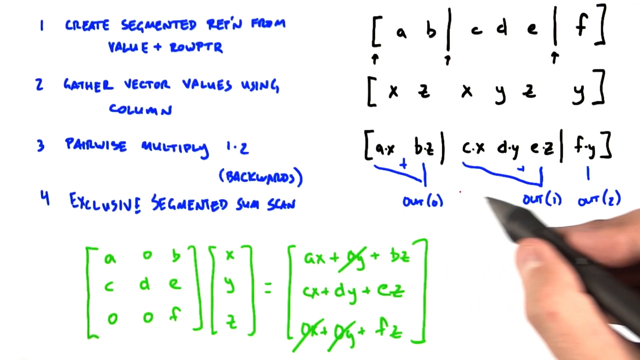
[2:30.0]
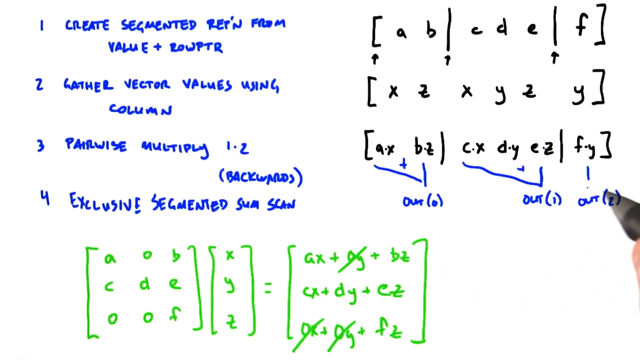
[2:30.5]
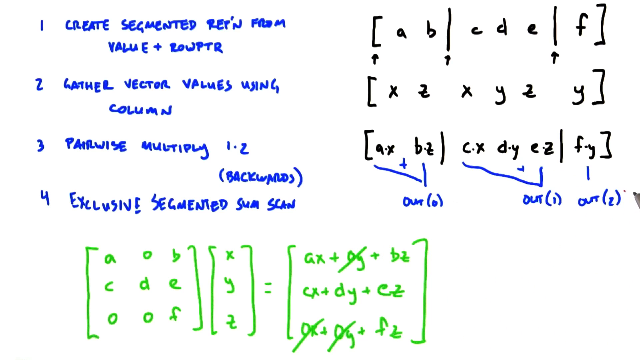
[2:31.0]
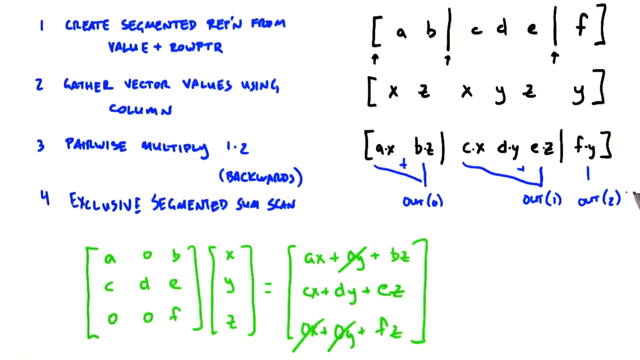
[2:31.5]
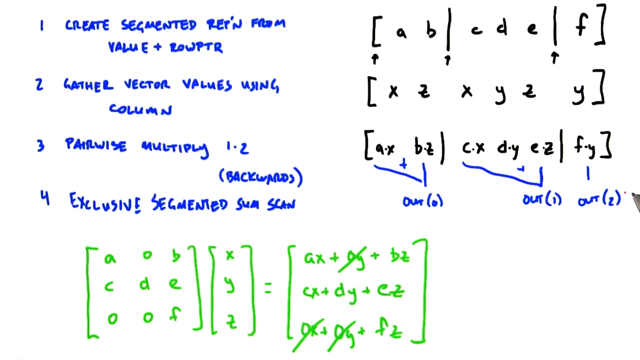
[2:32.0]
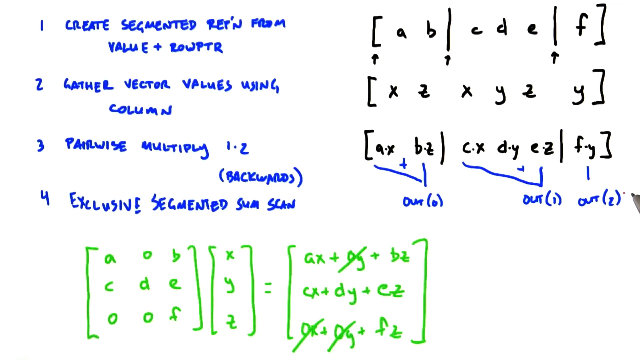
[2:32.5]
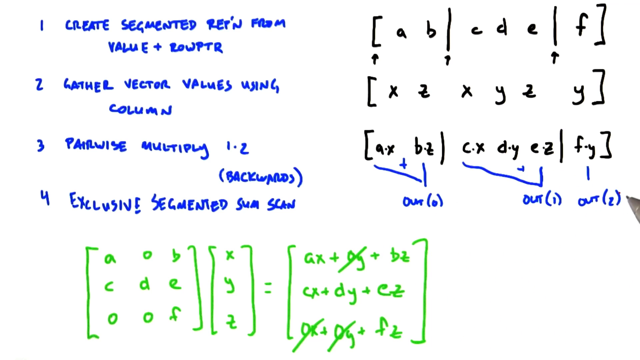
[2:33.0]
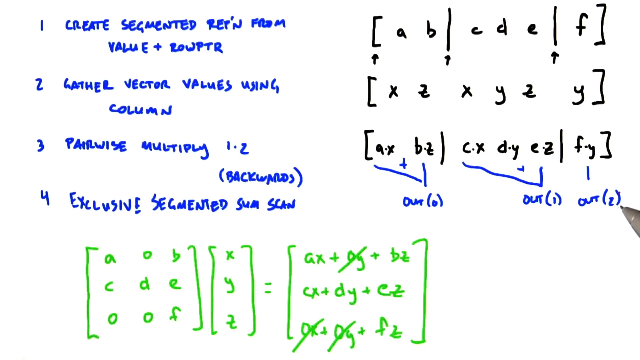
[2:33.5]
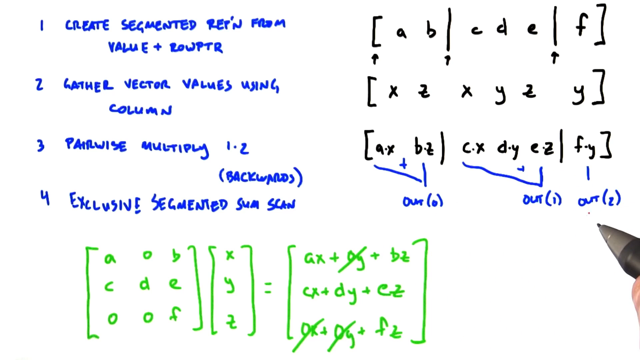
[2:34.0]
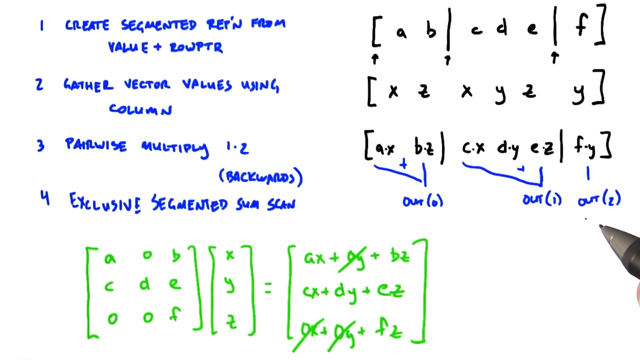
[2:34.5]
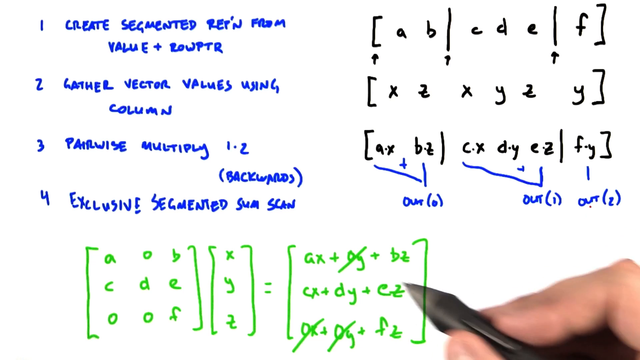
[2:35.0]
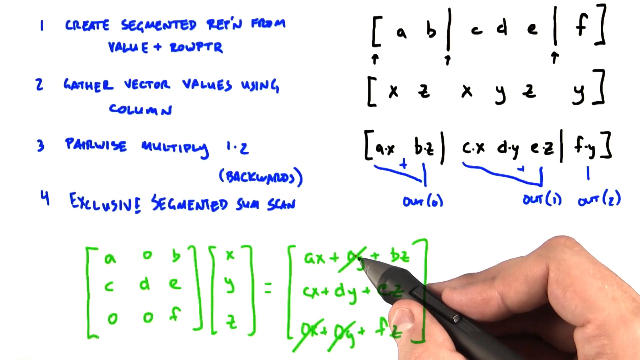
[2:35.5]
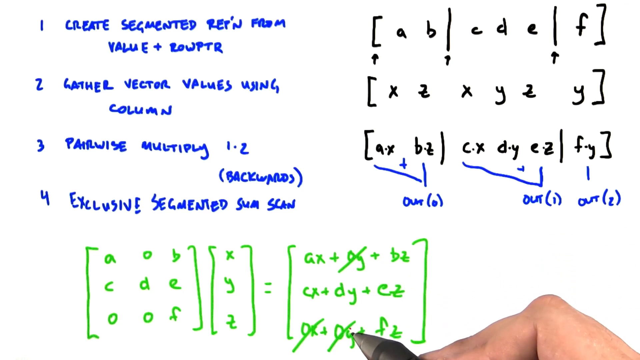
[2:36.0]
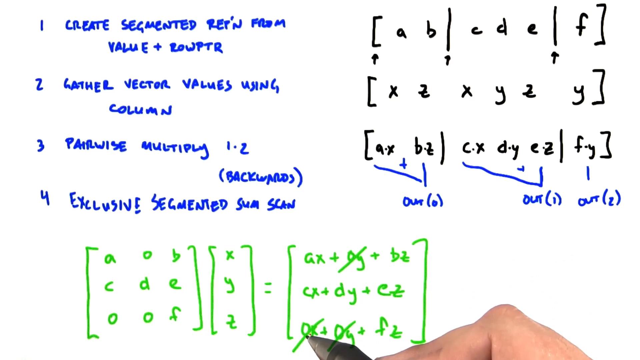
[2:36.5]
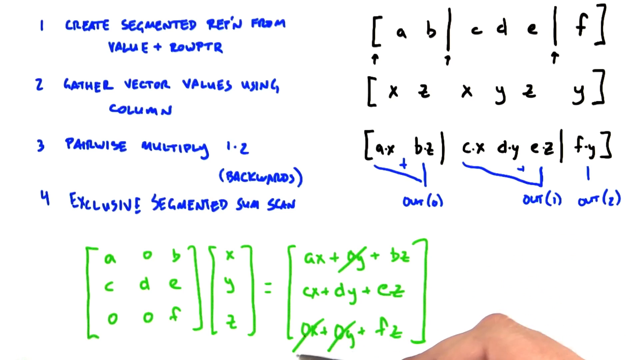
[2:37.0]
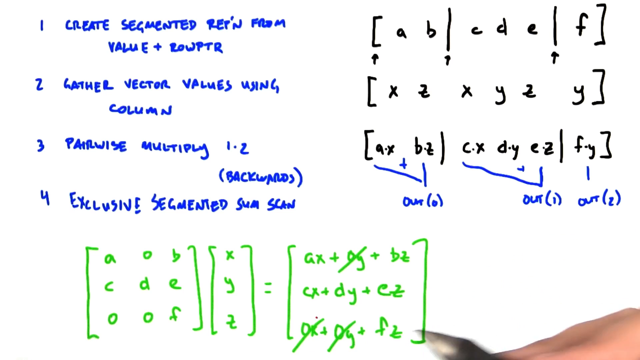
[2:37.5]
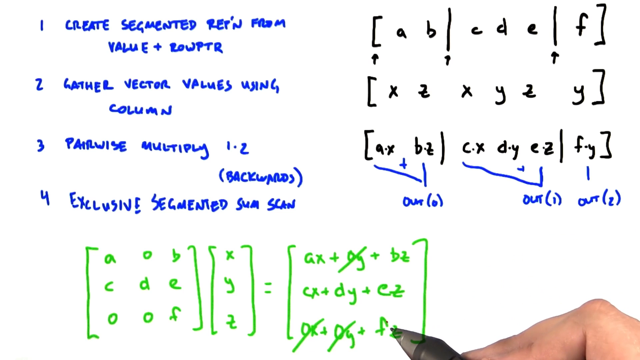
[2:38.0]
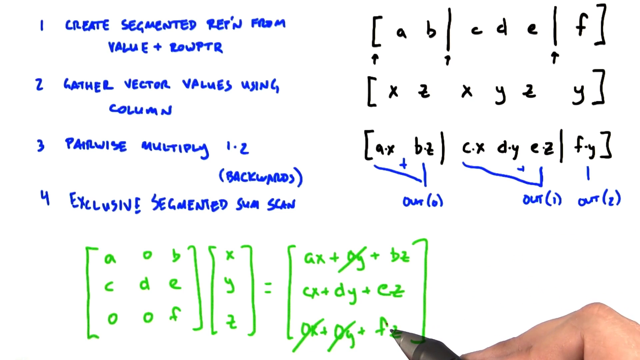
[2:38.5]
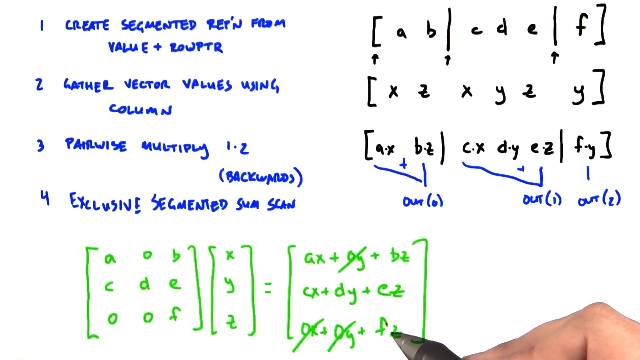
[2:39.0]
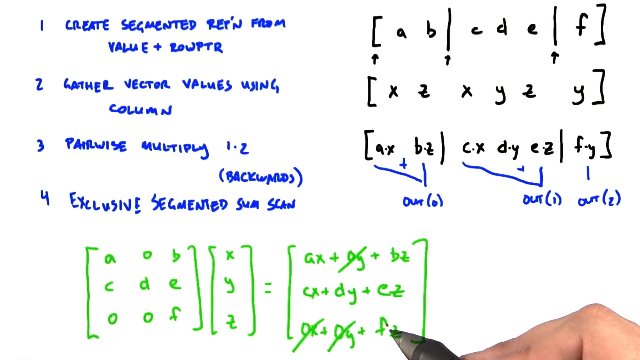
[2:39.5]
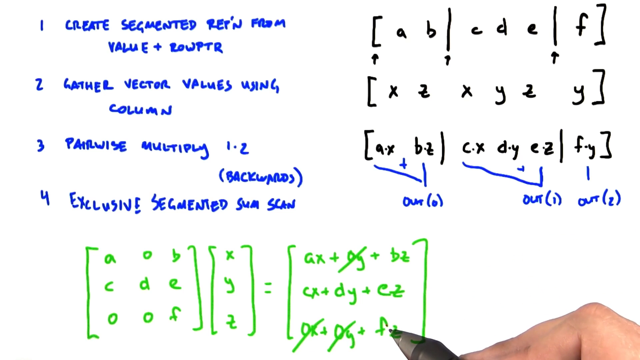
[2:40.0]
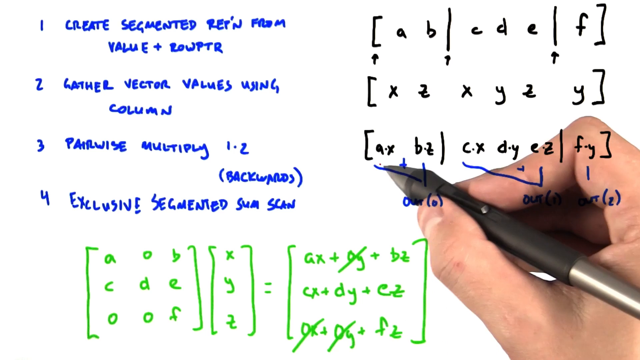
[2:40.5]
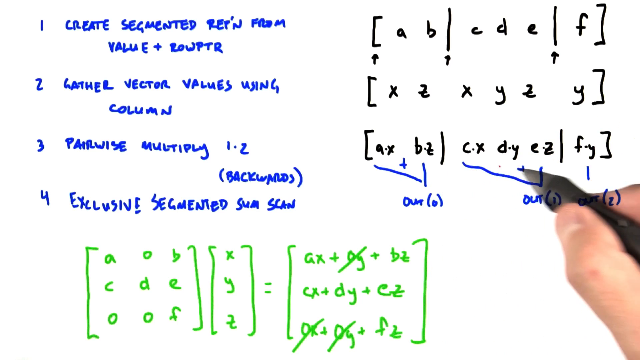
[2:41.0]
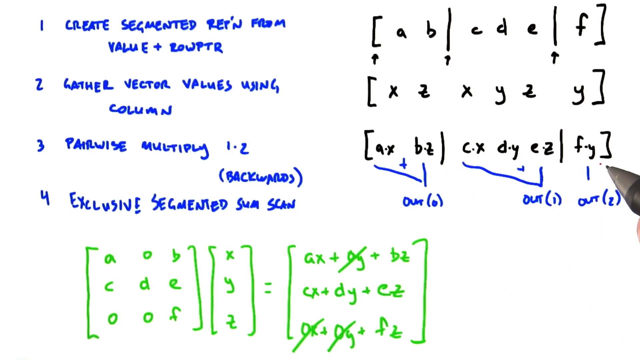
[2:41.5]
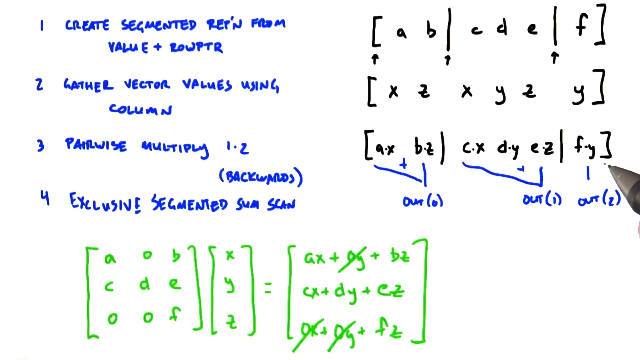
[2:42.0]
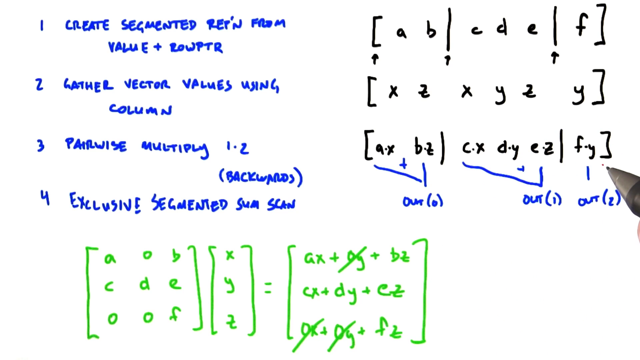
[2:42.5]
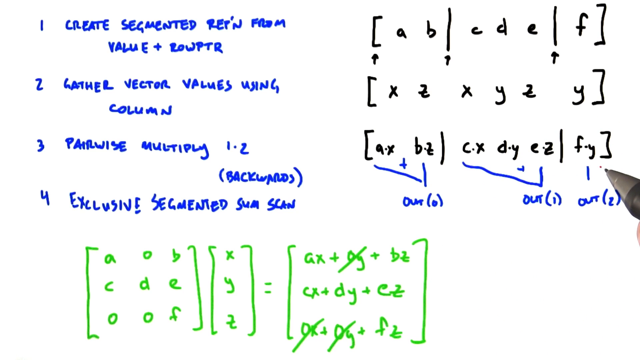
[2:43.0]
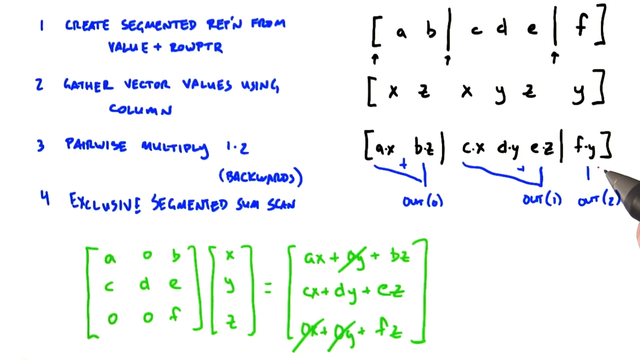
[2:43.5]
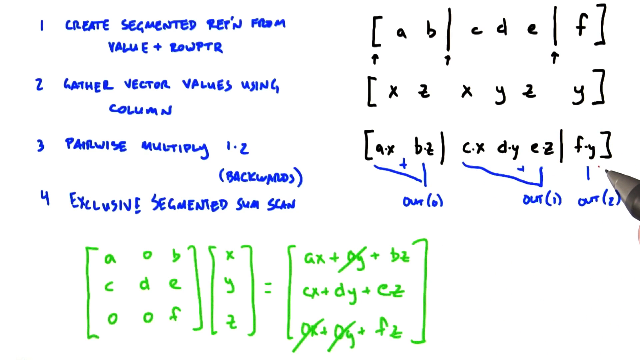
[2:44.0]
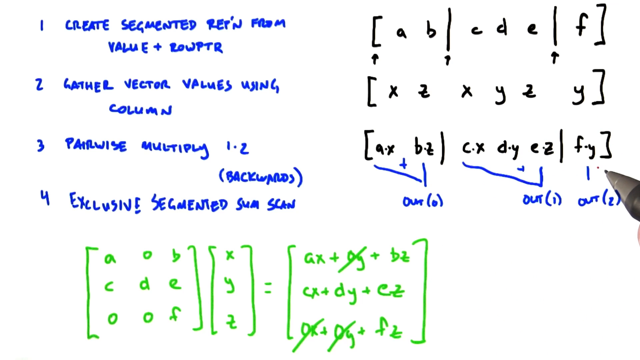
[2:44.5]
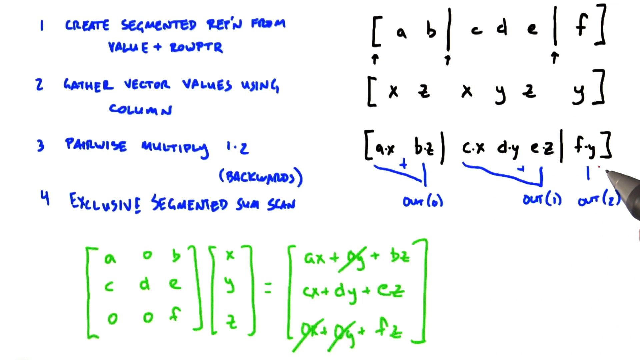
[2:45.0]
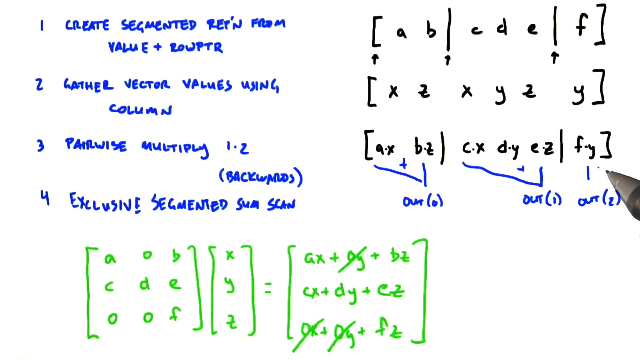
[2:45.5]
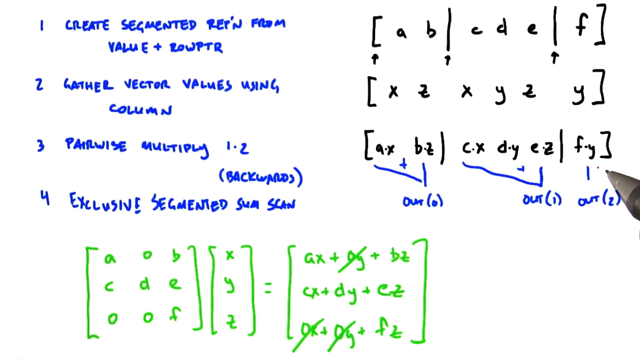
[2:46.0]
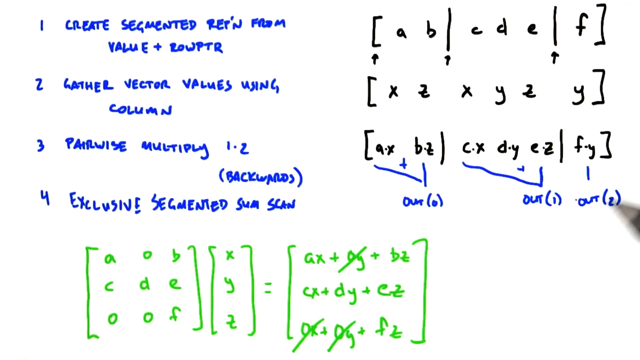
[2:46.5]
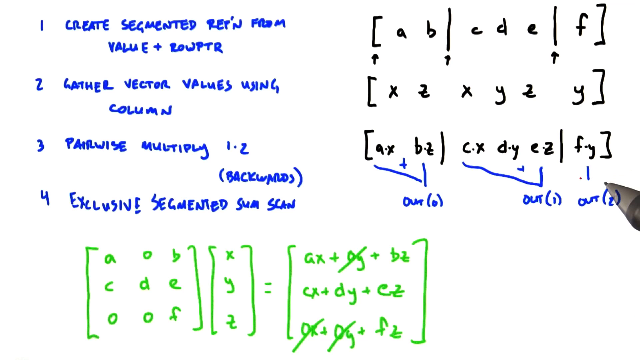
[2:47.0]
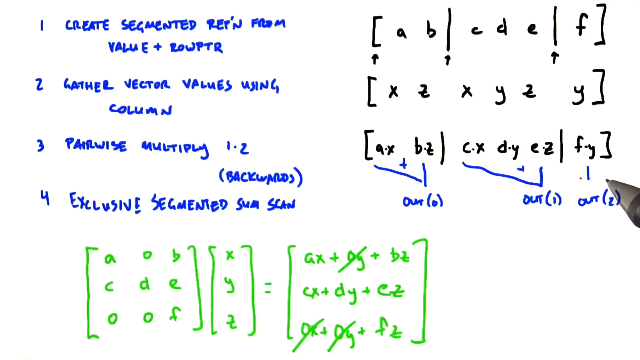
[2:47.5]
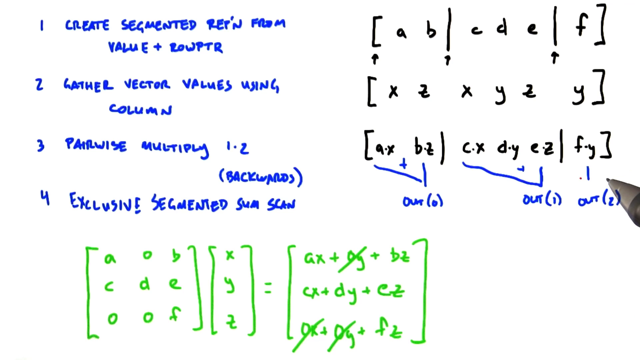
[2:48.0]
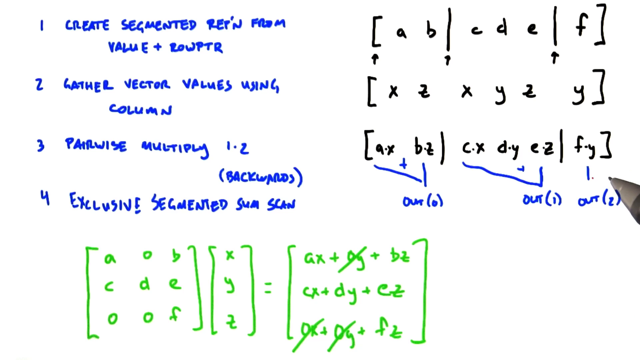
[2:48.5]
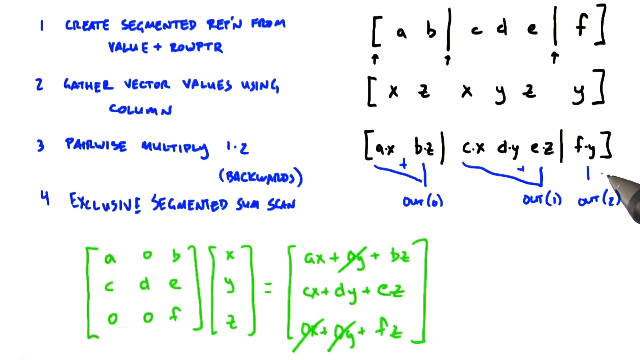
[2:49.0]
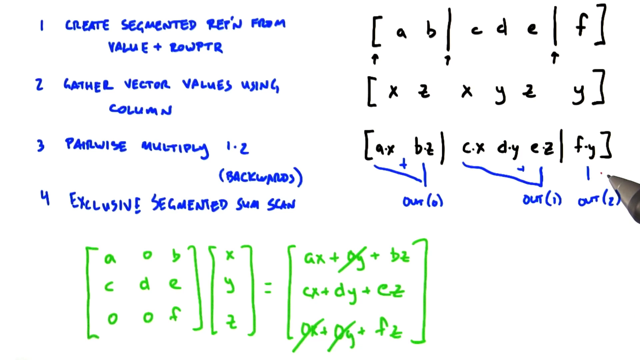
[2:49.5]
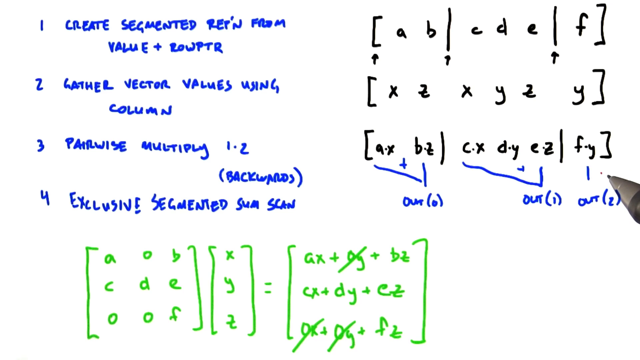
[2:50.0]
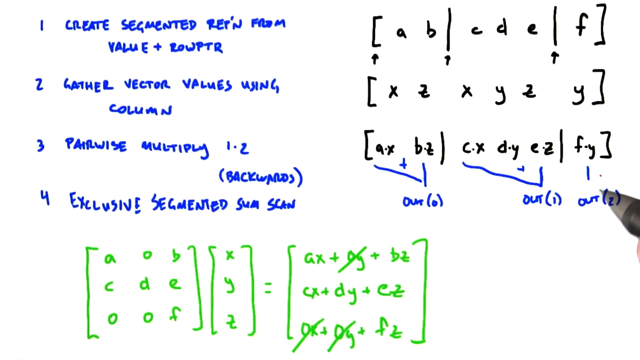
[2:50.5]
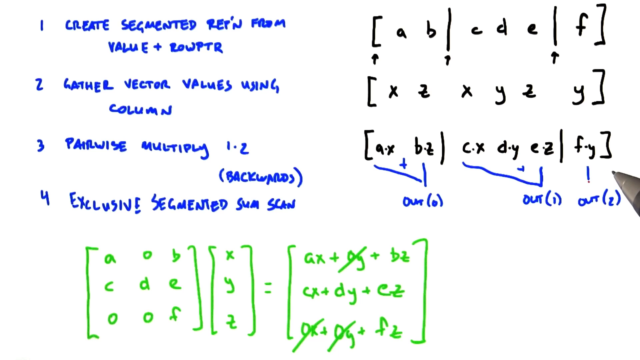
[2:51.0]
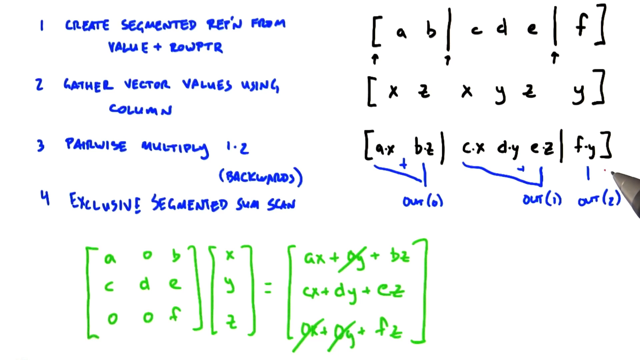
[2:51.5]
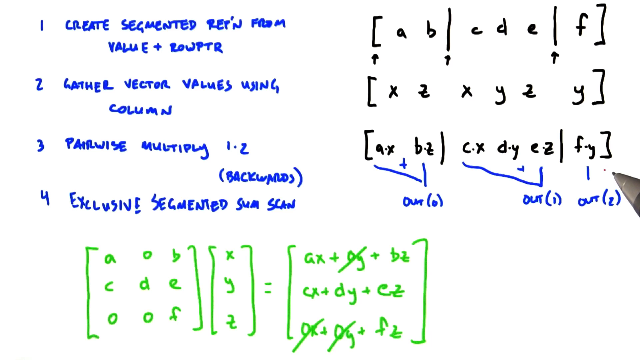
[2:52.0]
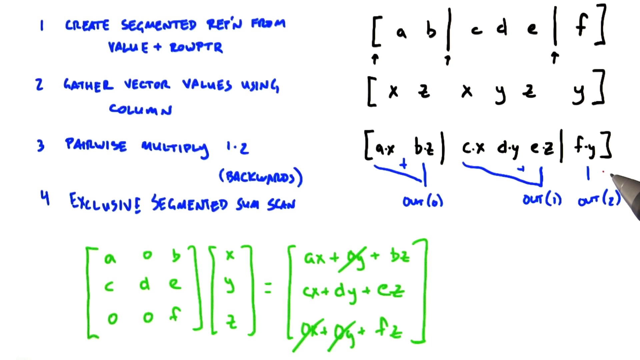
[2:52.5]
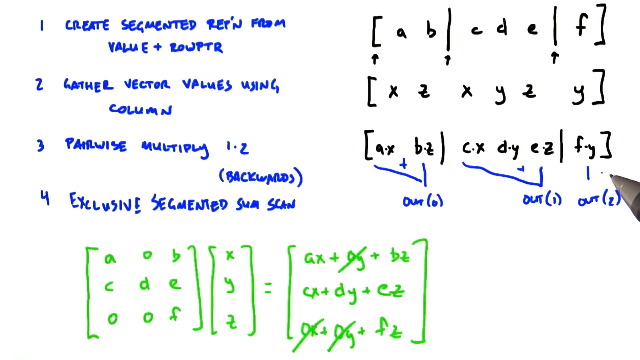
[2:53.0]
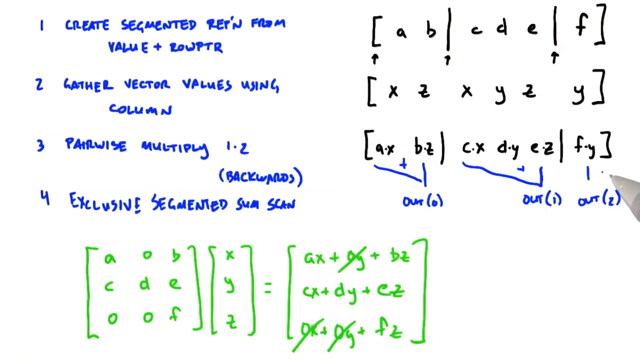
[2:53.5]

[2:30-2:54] Four steps written in blue are on the screen, each with a mathematical equation next to it using letters, symbols, and numbers. Below step 4 is an equation using letters and symbols, broken into three brackets. A person's right hand uses a black pen to point at different areas of the equation next to step 3, which includes an additional drawing with arrows, symbols, numbers, and the word "out" showing how to solve it. The hand and pen move back down the screen toward the equation in step 4; hovering over it, the hand notes certain letters and symbols used. It then goes back to step 3, pointing at different areas of that equation.